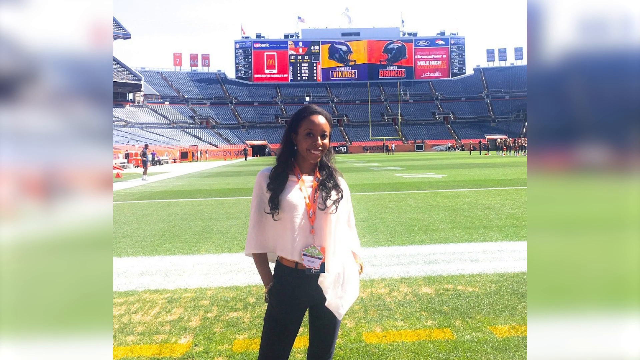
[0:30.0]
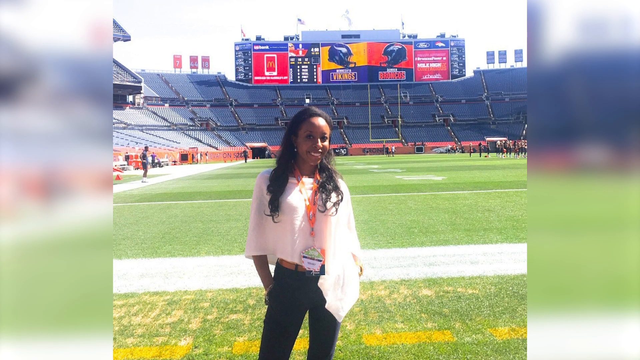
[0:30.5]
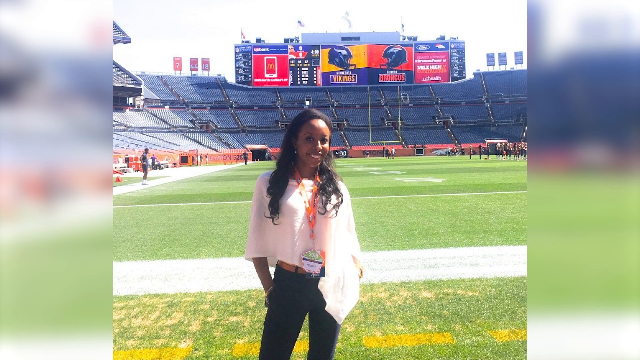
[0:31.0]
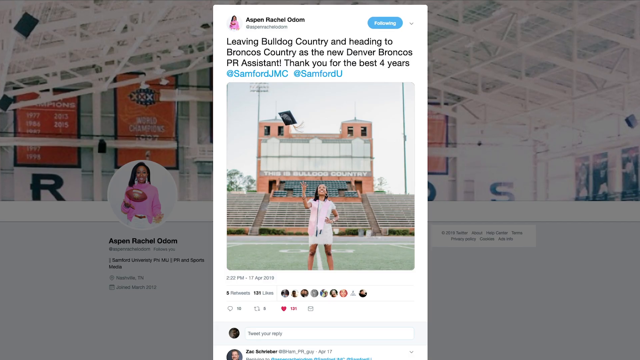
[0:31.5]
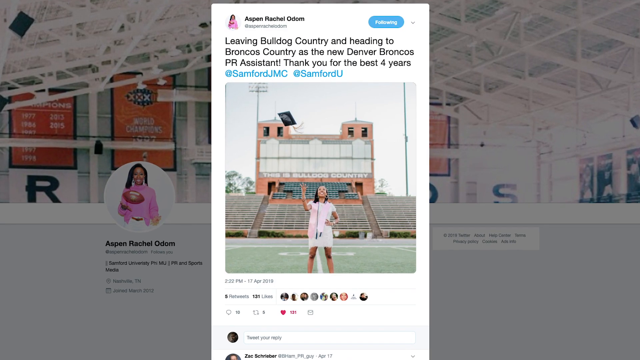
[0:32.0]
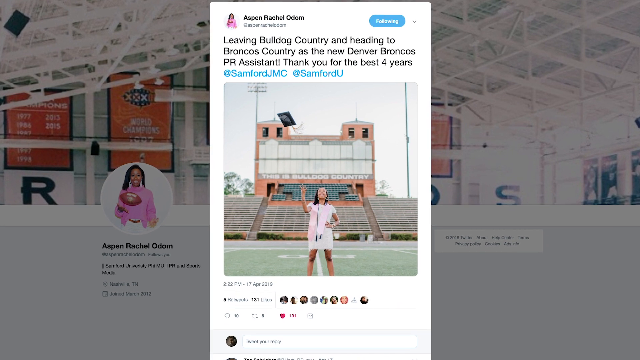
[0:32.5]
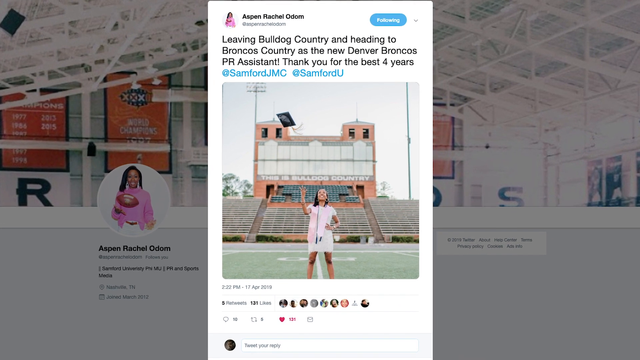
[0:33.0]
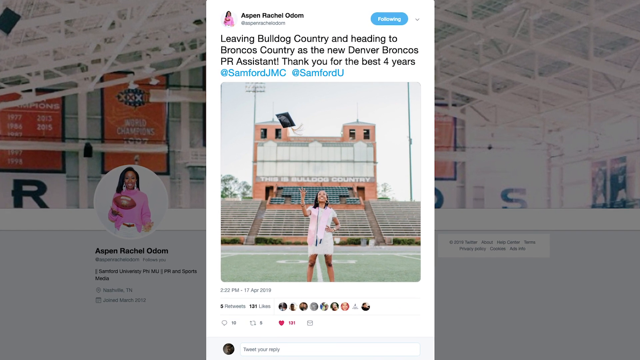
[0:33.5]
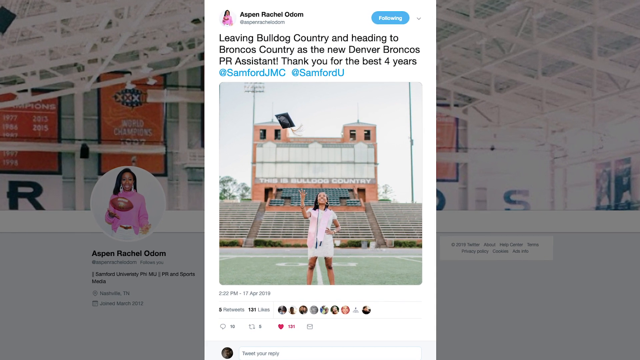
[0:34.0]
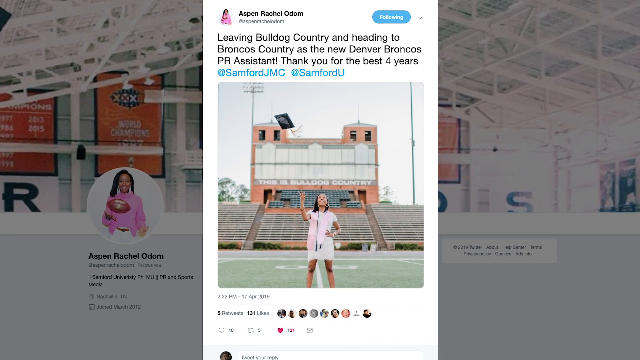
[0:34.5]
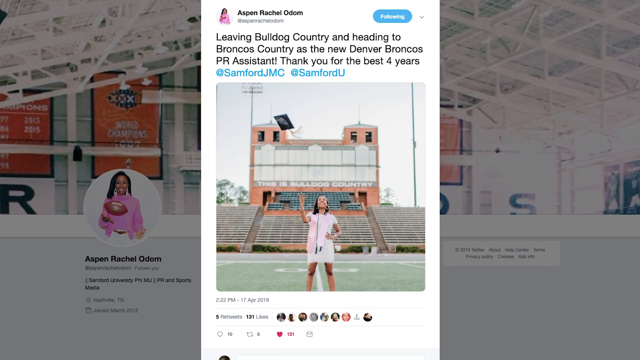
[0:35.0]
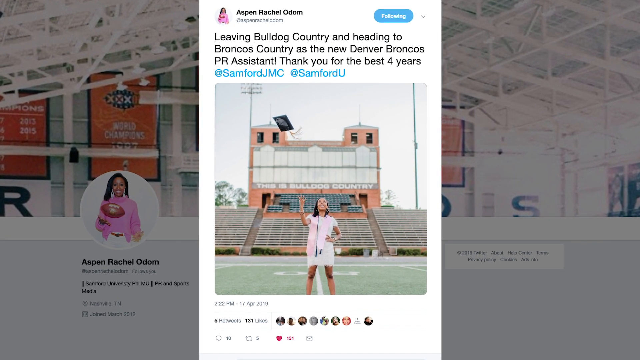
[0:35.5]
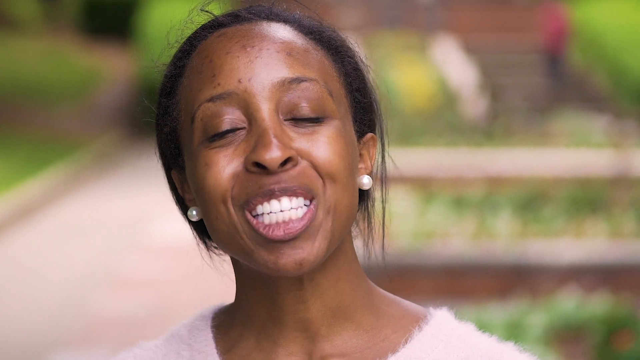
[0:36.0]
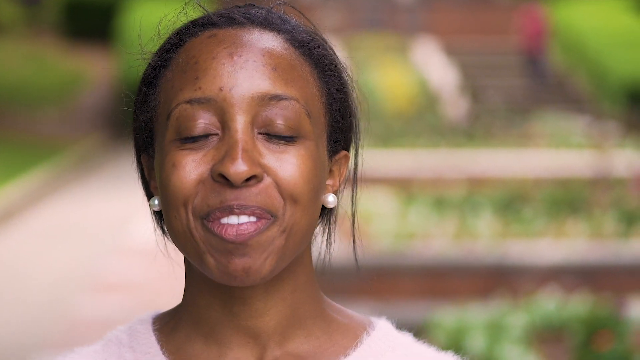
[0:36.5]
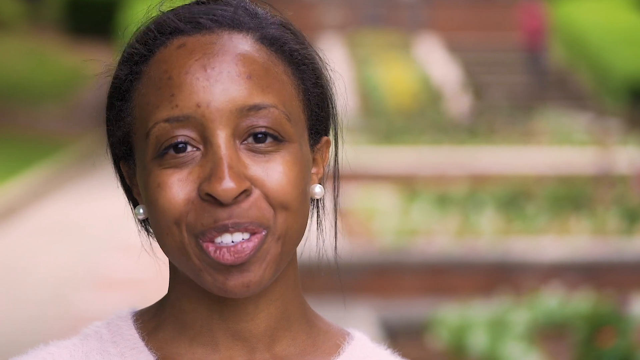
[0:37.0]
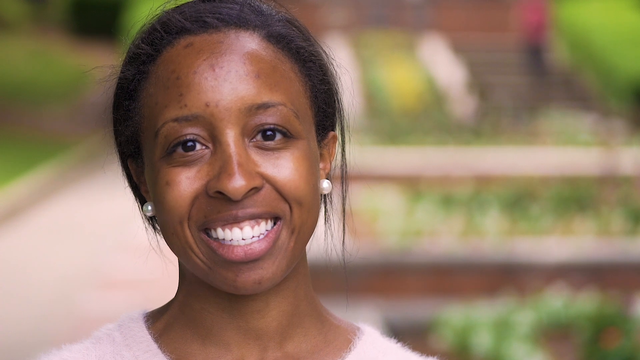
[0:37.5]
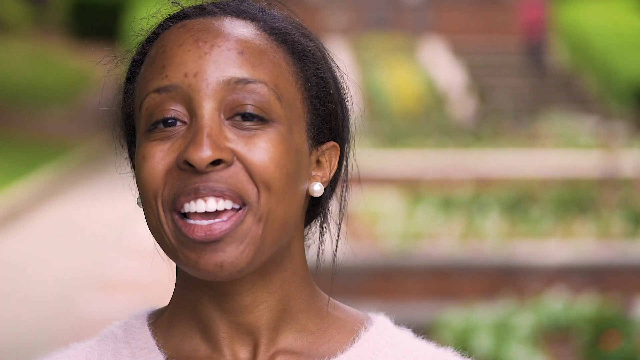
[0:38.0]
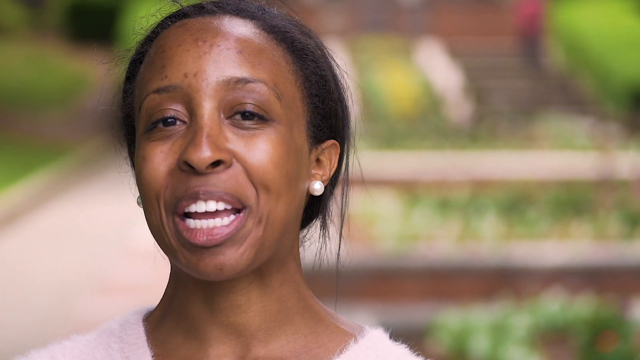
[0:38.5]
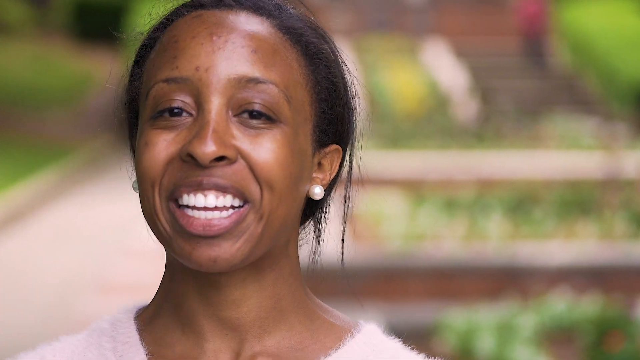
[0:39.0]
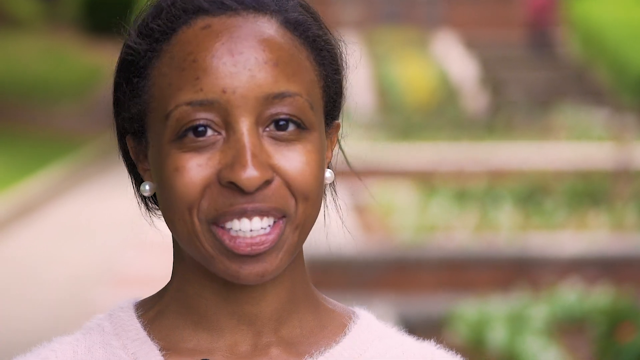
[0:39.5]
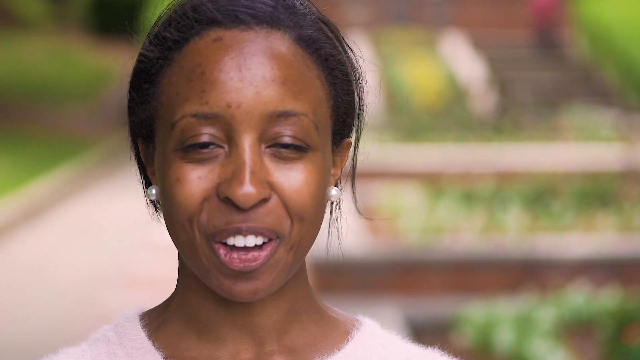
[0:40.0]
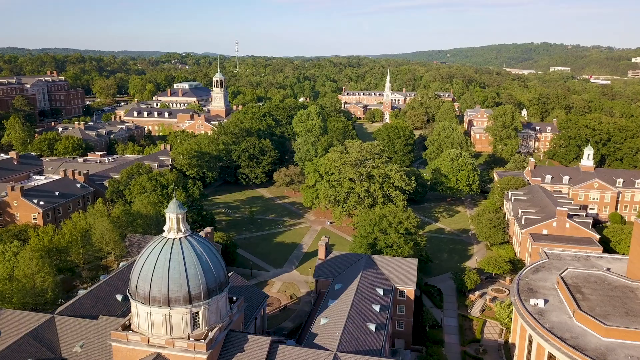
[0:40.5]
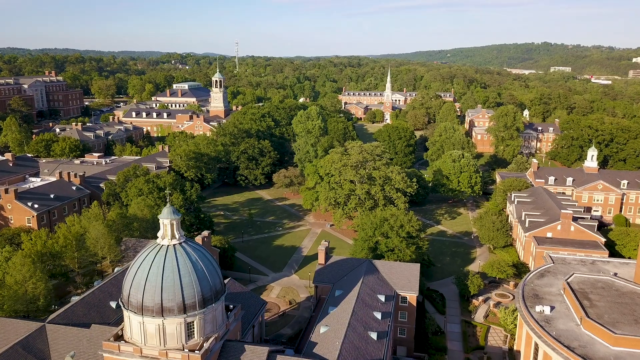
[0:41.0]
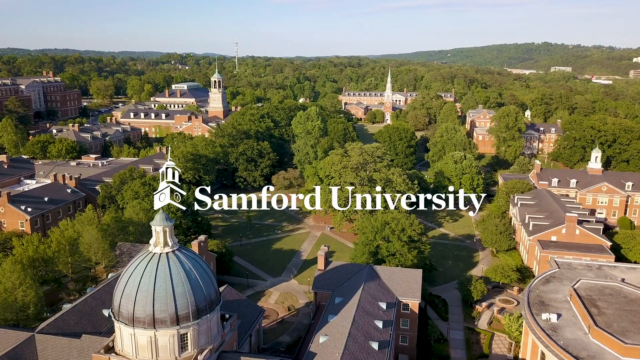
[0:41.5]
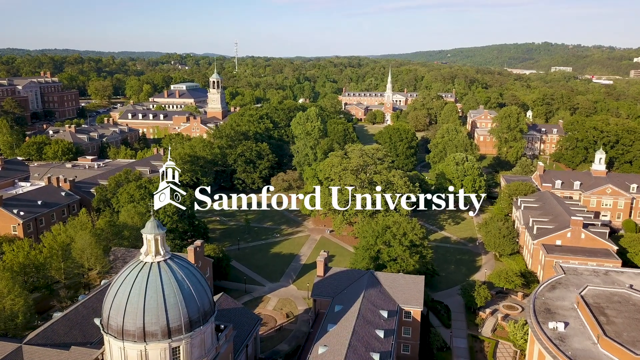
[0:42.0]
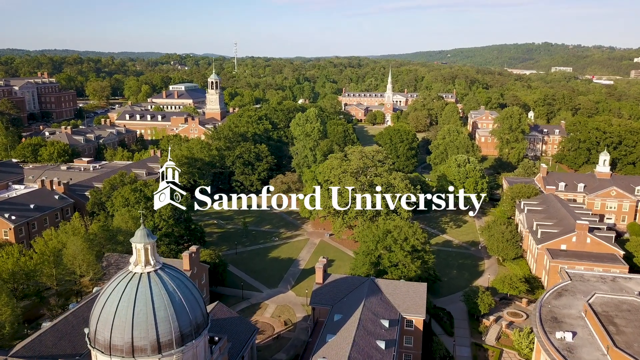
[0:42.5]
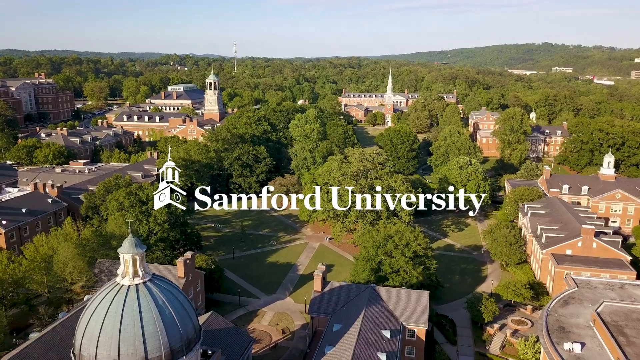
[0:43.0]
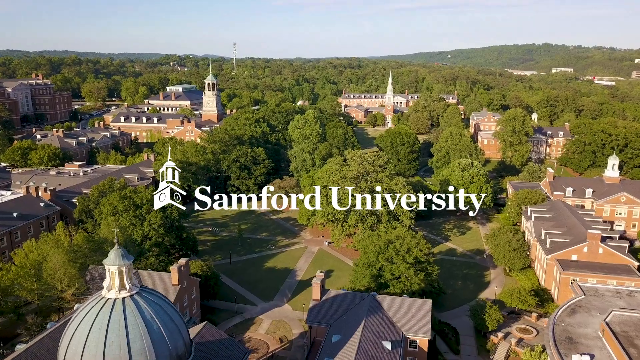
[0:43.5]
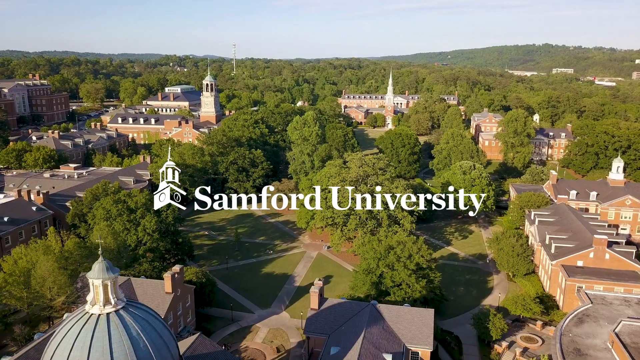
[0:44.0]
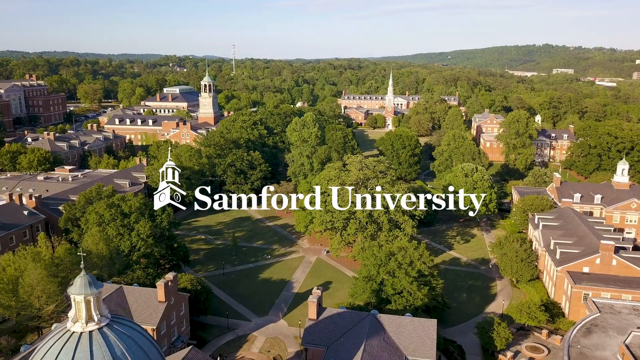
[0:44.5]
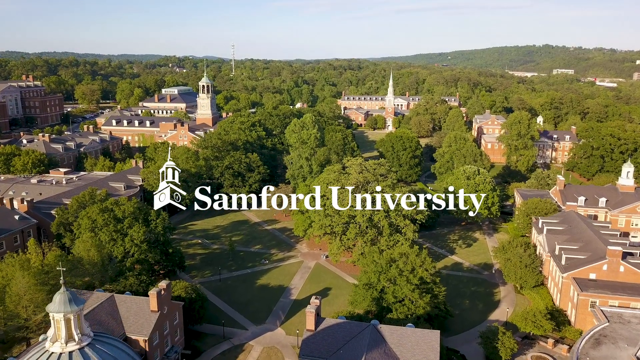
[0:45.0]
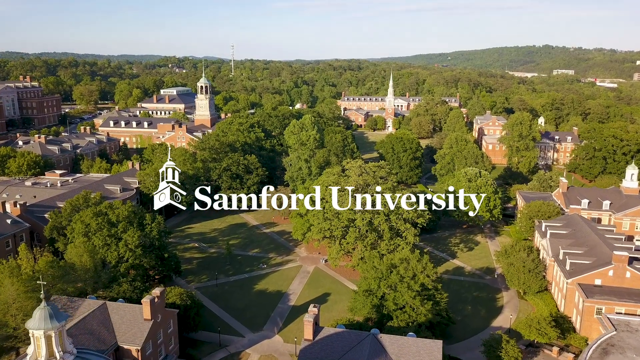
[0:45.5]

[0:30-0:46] An image shows a woman standing on a football field on a sunny day. She wears what looks like a white poncho and dark pants, has her hair down and a lanyard around her neck, and smiles at the camera. The video then cuts to an image of a Twitter feed showing a post, apparently from the same woman, saying that she is leaving the team and going somewhere else. It cuts back to video of the same woman speaking to the camera, wearing a pink sweater, with her hair pulled back. The shot then transitions into what looks like an aerial shot of the college campus, panning forward across the grass and the brick buildings. Text comes on screen reading "Sanford University" as the camera continues to sort of pan forward across the campus. The video finishes on that shot, showing the campus buildings and how vibrant and lively the campus looks, possibly during spring.